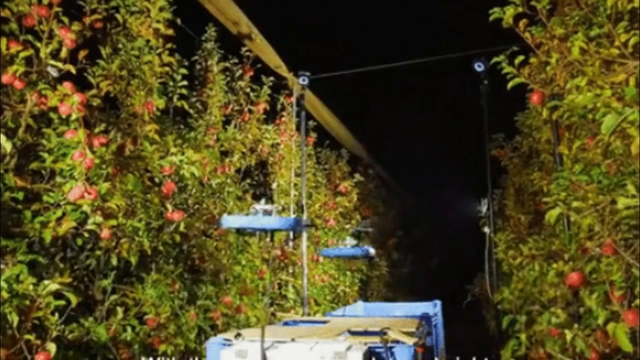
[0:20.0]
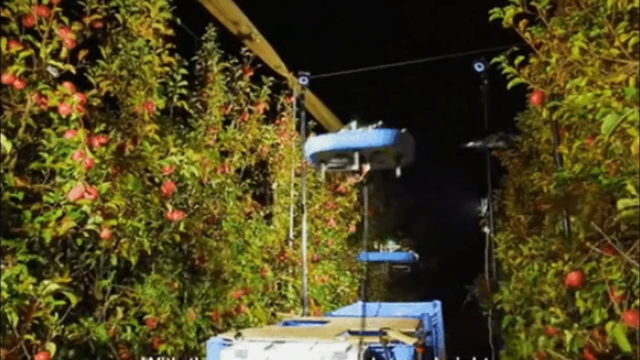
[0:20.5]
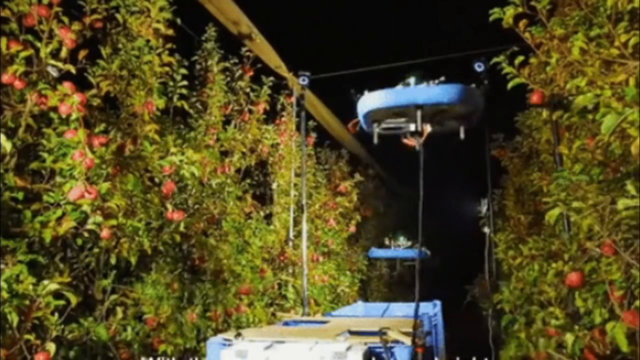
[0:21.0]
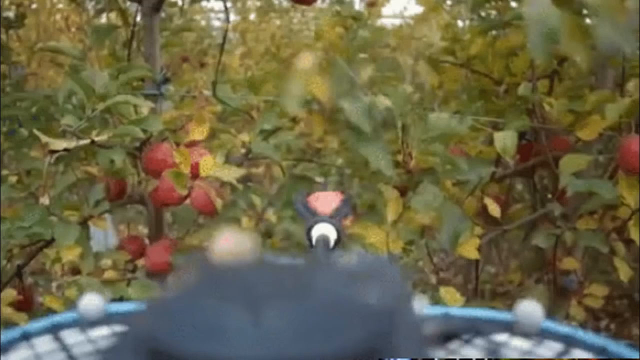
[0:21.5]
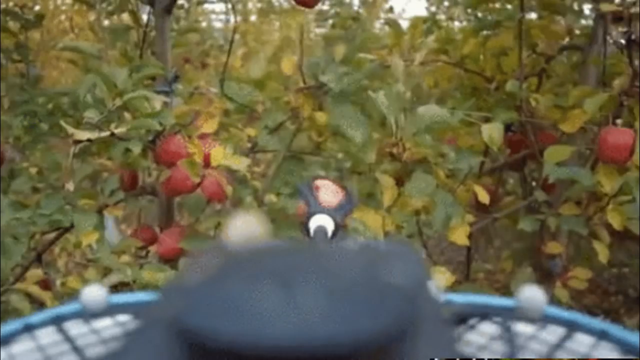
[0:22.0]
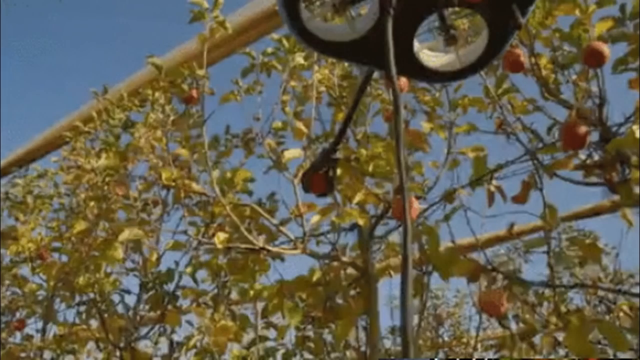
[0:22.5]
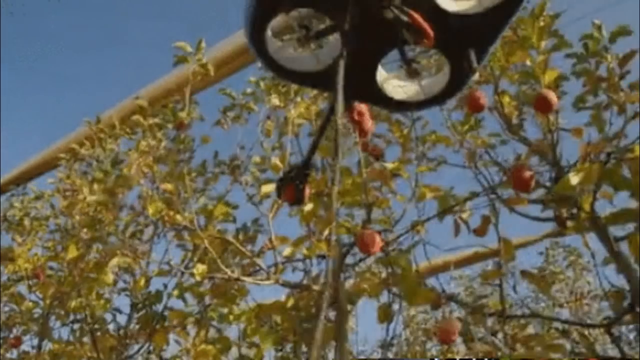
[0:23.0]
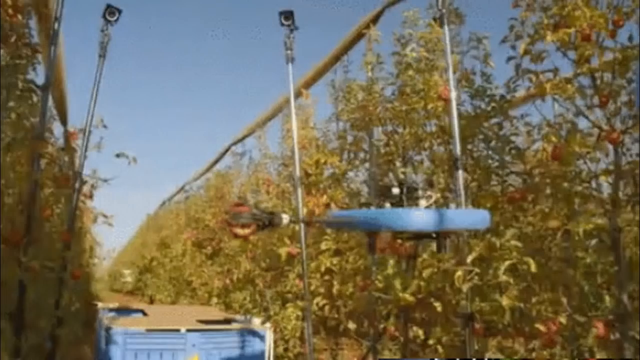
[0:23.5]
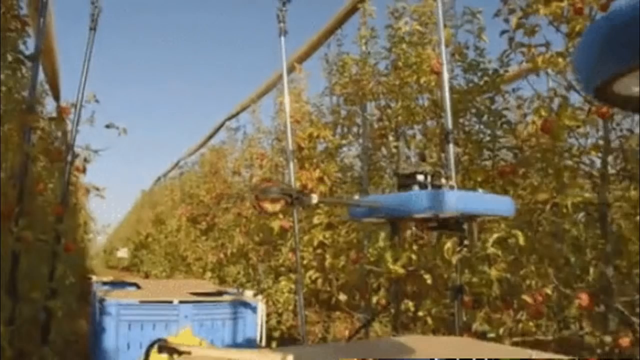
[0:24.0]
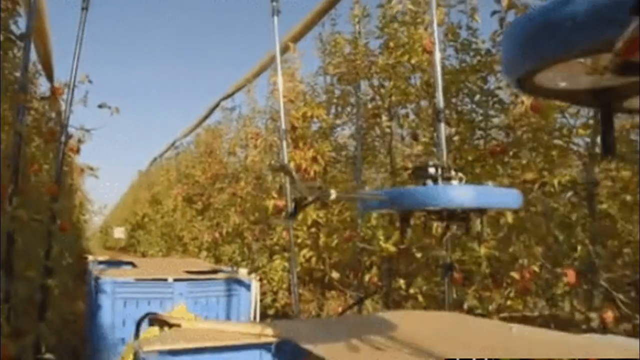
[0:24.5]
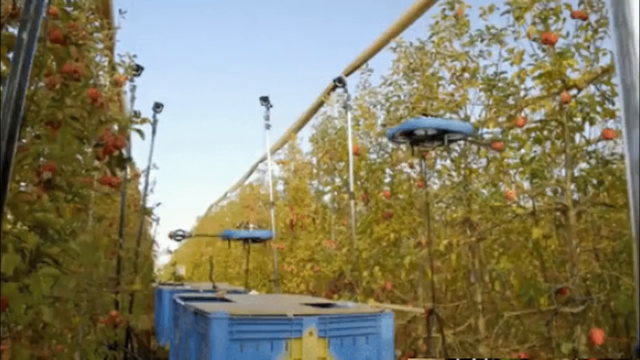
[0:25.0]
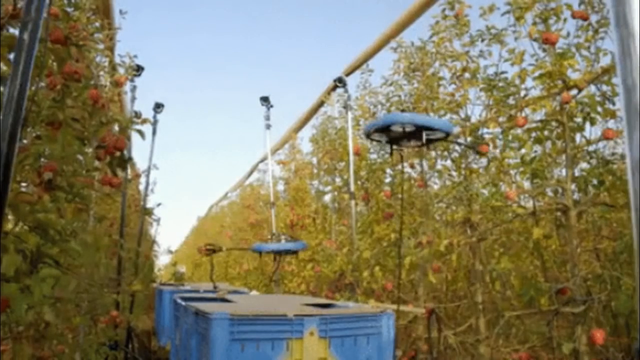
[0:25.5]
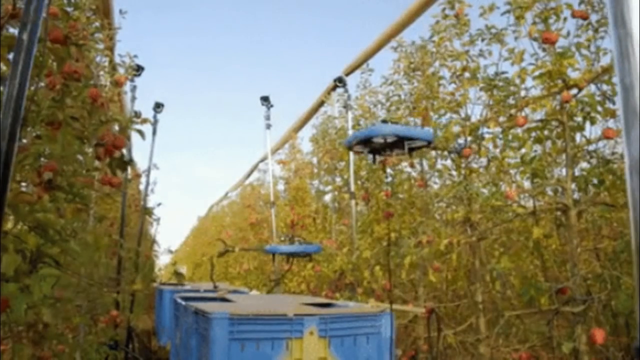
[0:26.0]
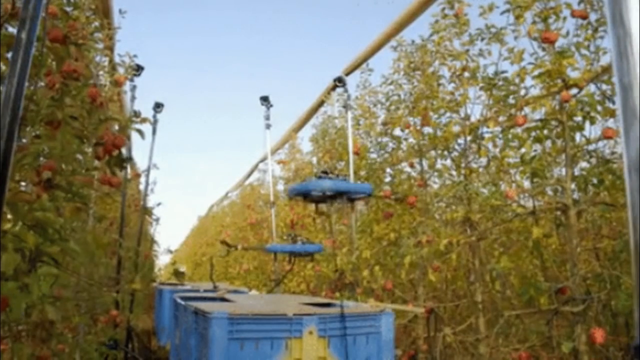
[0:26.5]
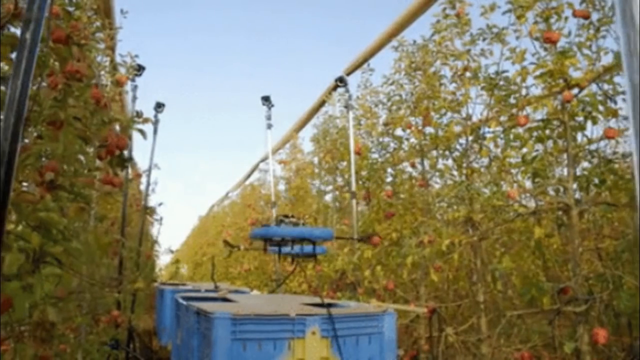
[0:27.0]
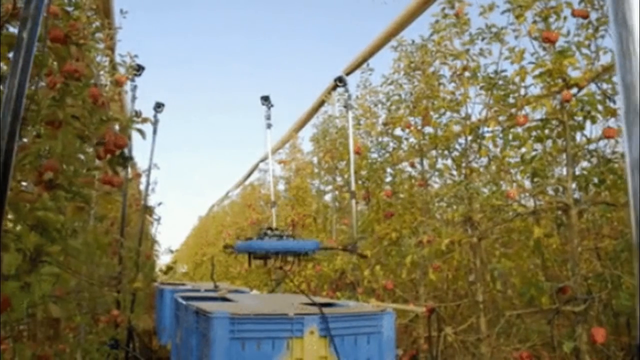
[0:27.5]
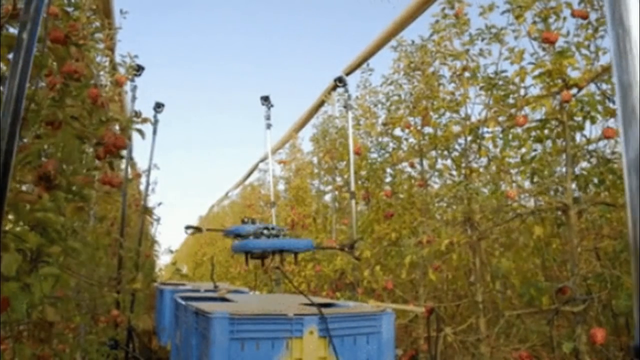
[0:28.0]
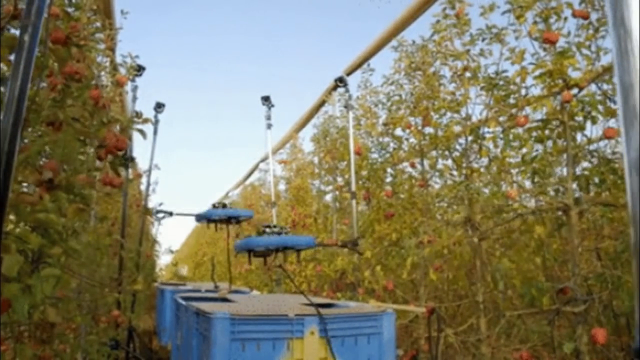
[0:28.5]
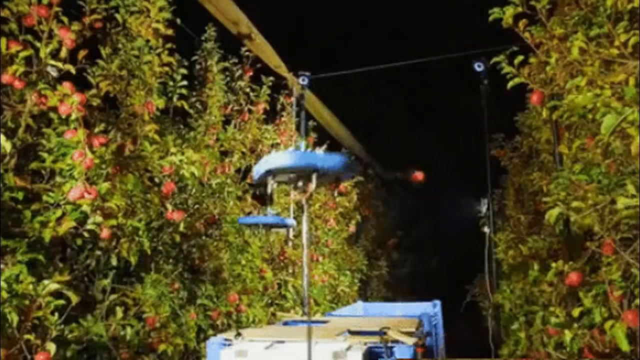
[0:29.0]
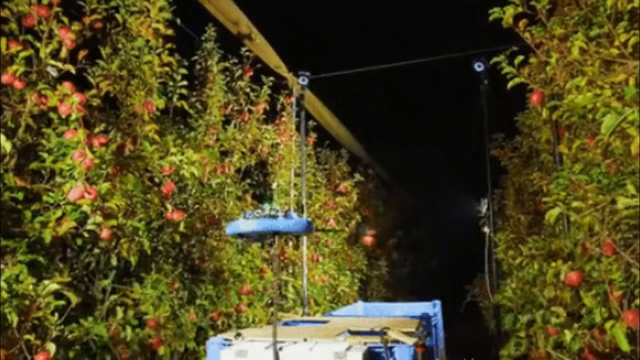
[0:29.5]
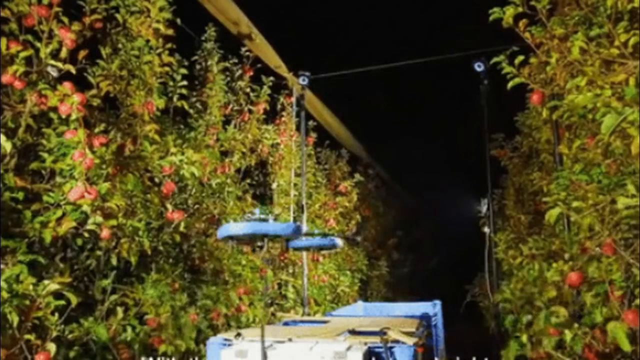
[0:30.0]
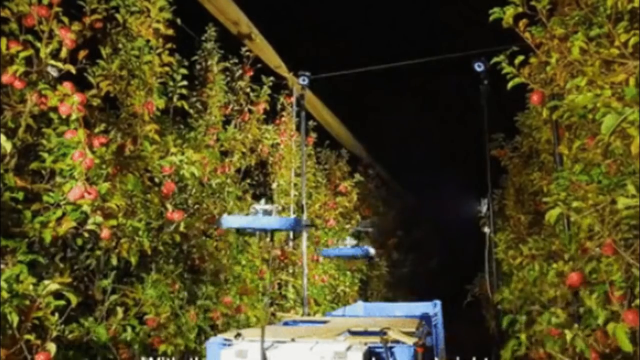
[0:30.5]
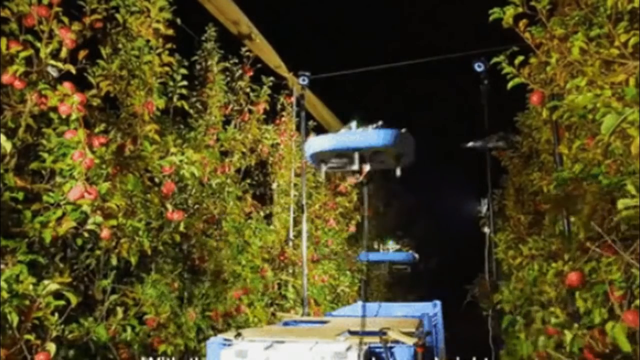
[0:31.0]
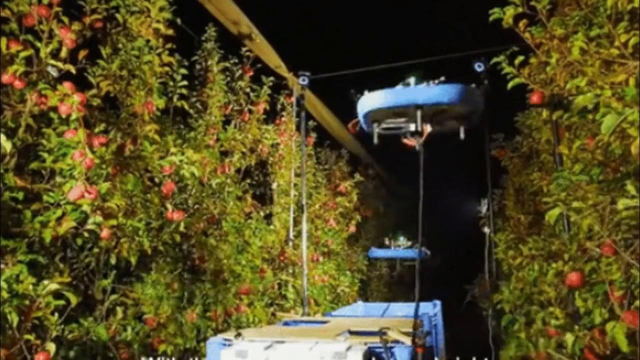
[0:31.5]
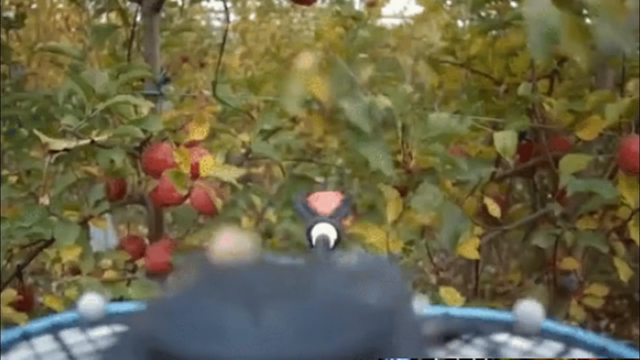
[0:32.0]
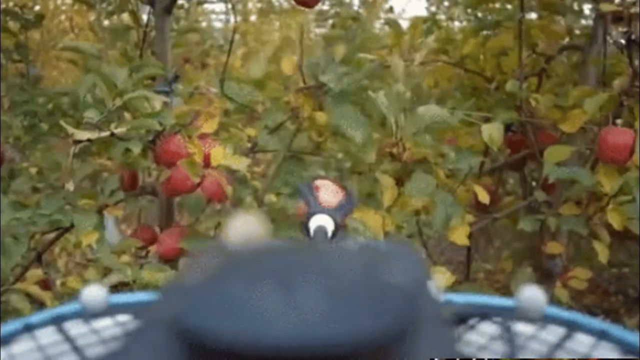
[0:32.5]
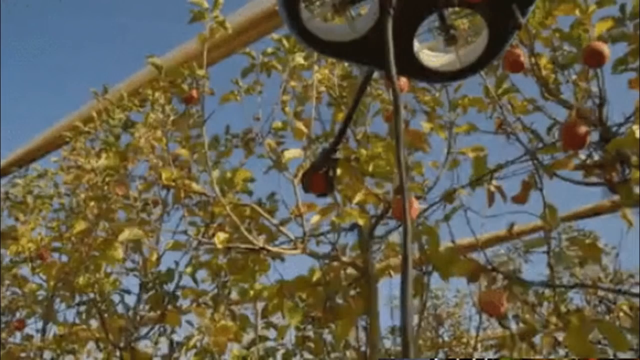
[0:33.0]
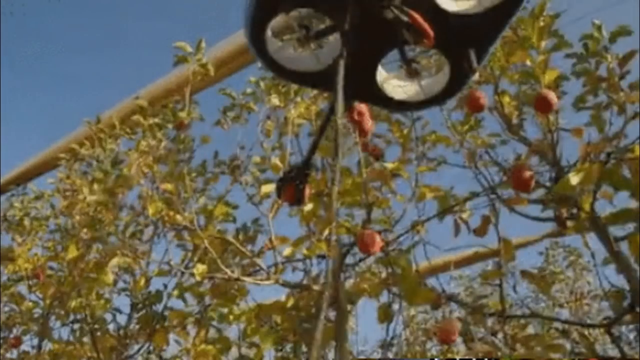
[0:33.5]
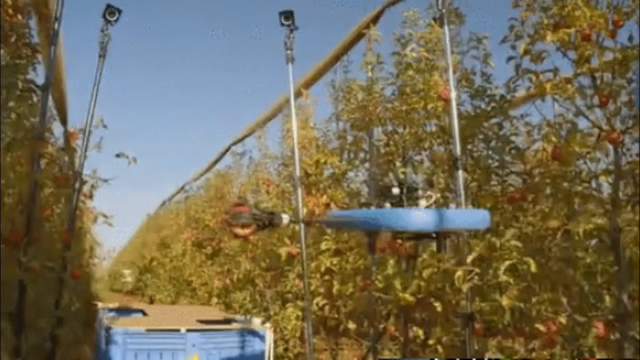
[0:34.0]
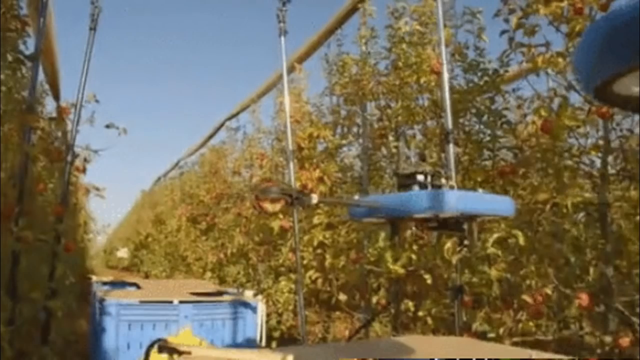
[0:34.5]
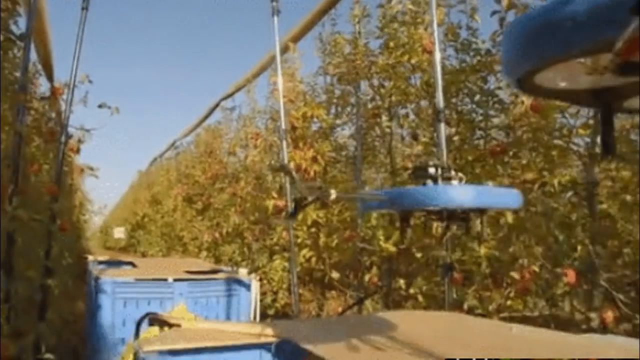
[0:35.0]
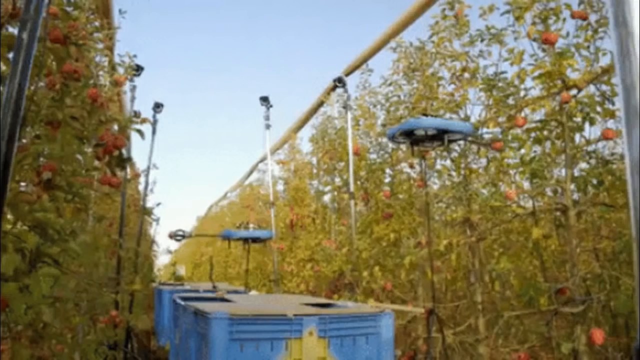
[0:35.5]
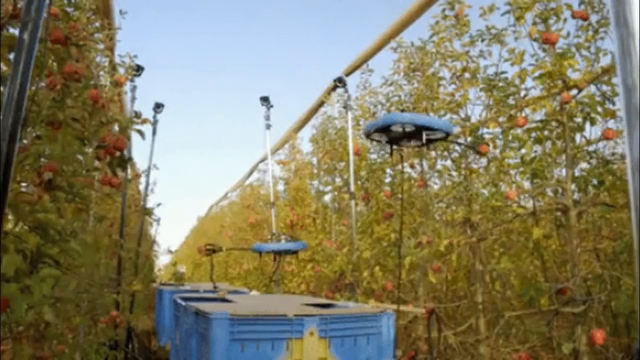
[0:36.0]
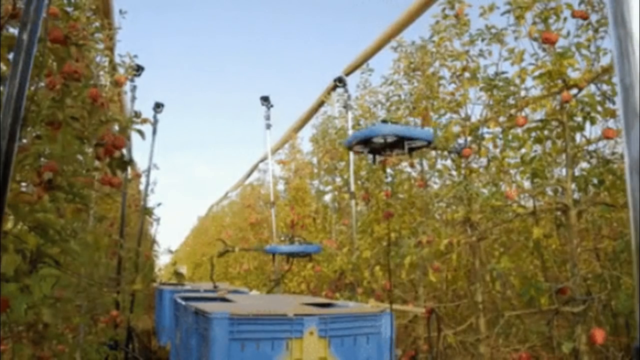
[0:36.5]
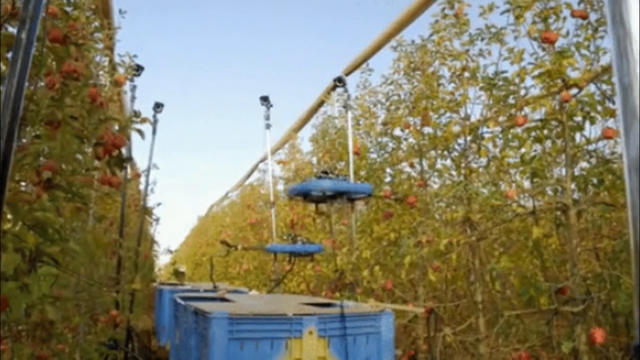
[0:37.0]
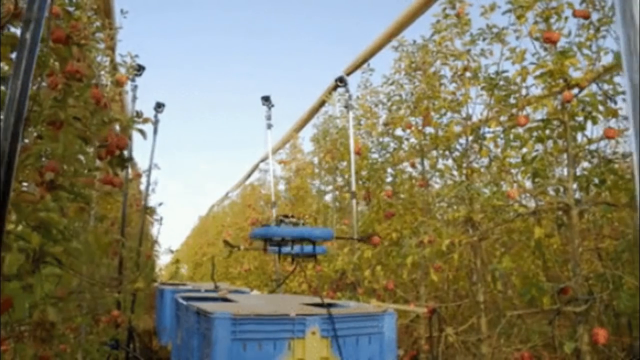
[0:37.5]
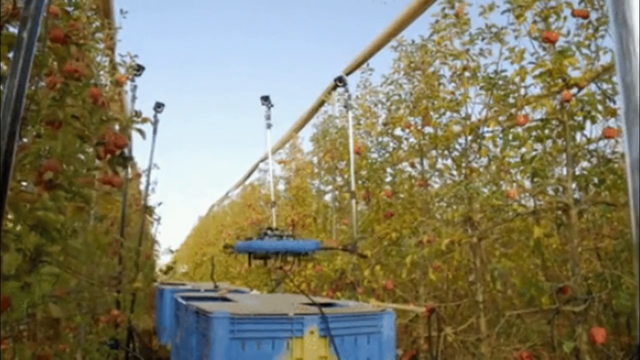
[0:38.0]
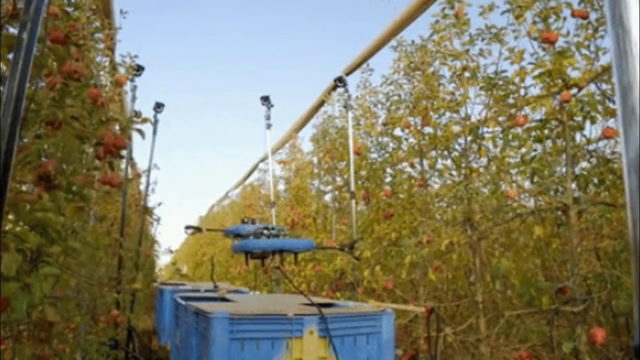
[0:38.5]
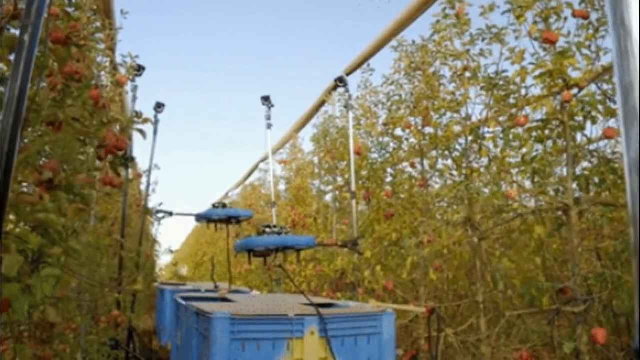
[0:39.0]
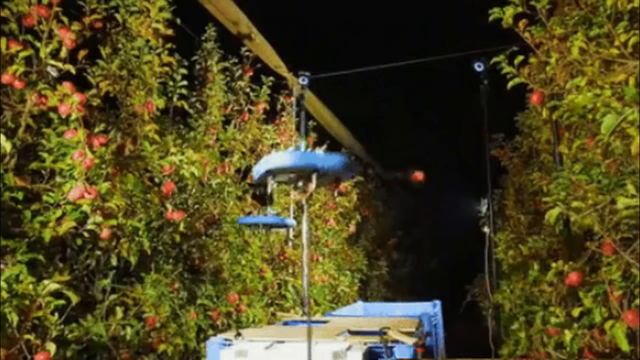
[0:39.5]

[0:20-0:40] At night, the fruit trees on both sides are connected to large beams that appear to be wooden, and the trees look like they hang from them. The sky is pitch black, but the area with the fruit trees is very well illuminated by the equipment. The scene then returns to daytime, and blue metal equipment that looks almost like a little spaceship moves around, looking like it is flying, by day and by night. The fruit trees and the fruit on them are visible as it moves. Large metal equipment pieces in the center of the fruit trees look attached to the blue equipment and are apparently powering it.